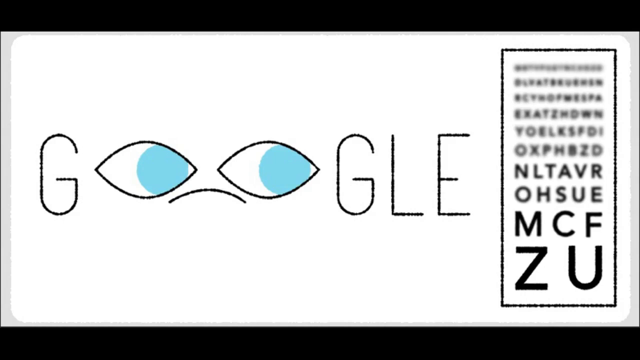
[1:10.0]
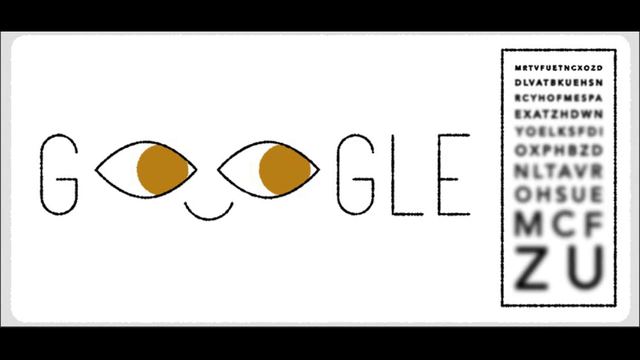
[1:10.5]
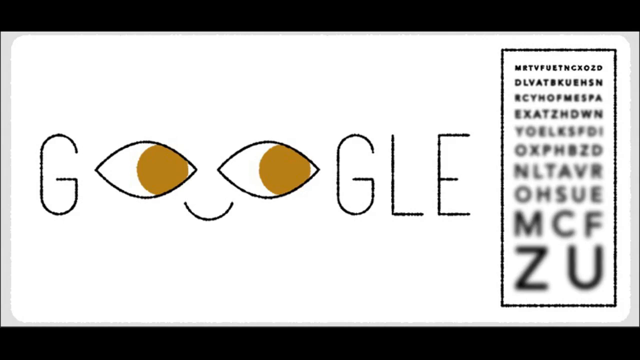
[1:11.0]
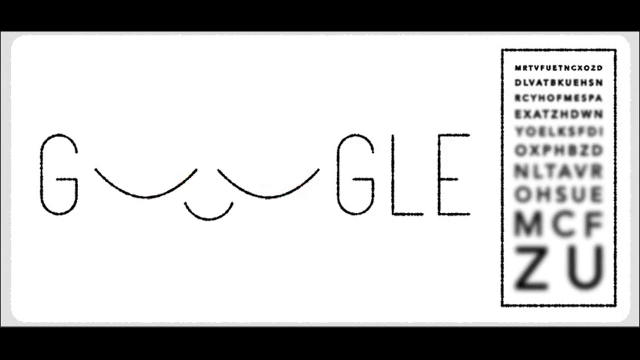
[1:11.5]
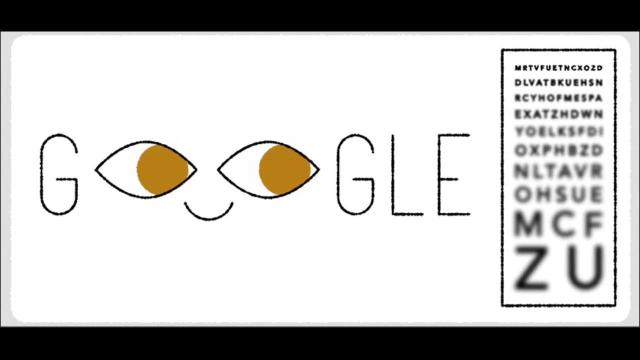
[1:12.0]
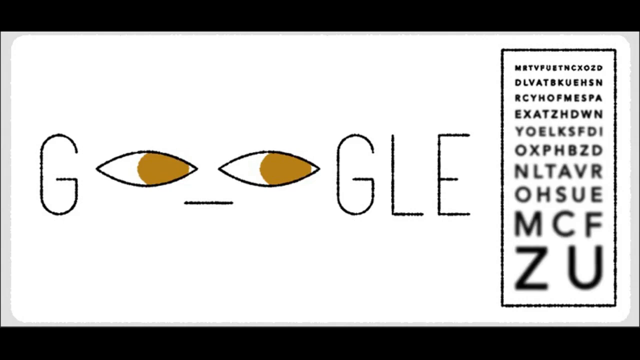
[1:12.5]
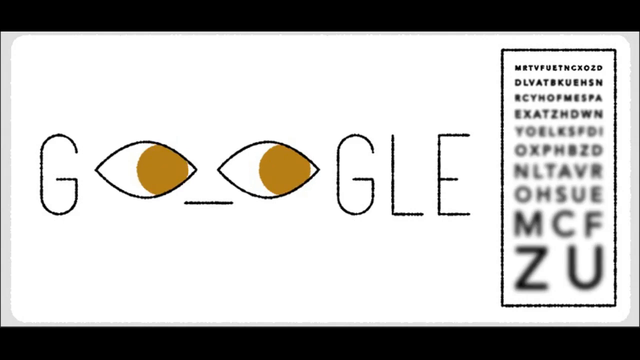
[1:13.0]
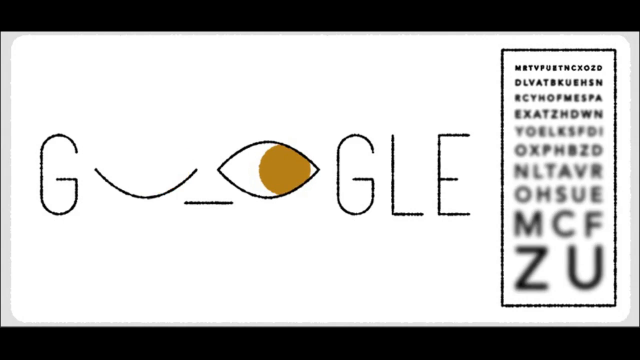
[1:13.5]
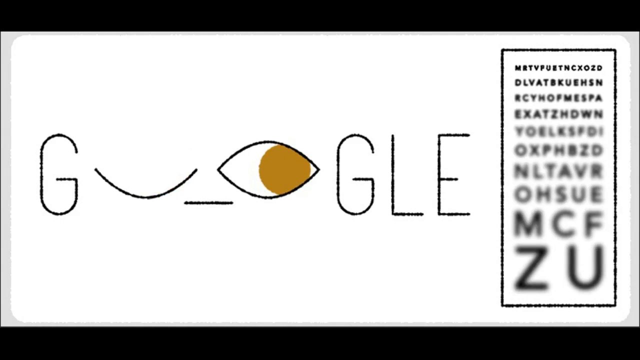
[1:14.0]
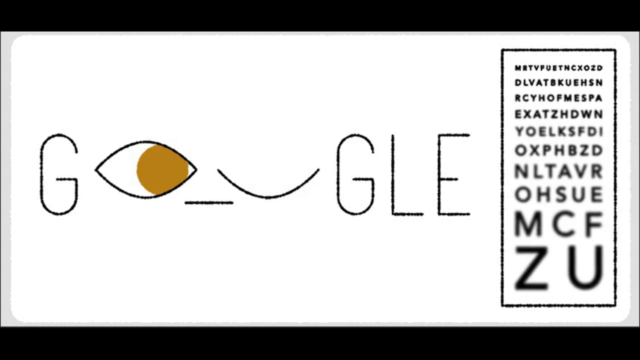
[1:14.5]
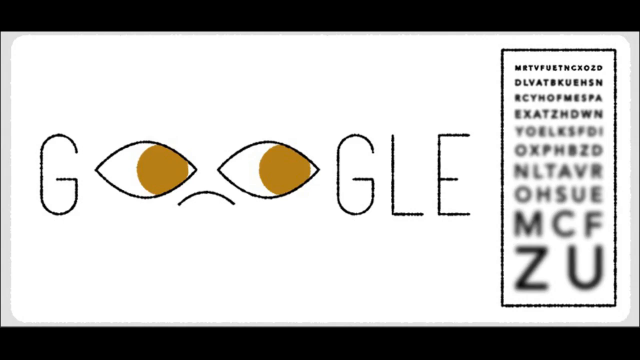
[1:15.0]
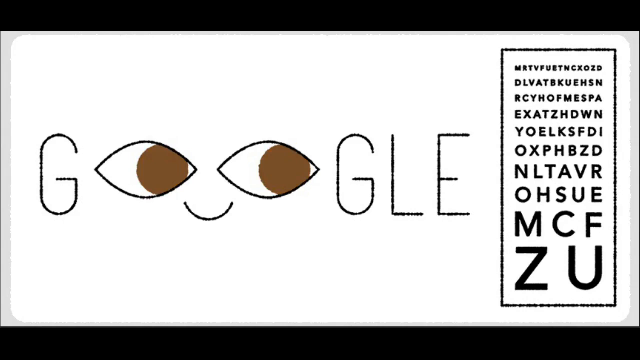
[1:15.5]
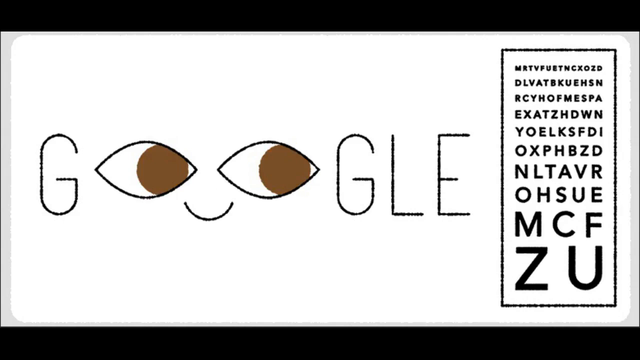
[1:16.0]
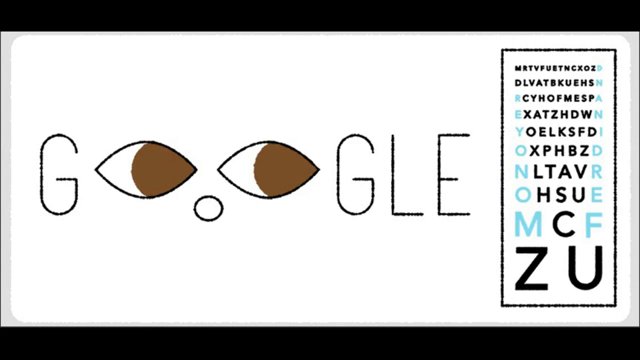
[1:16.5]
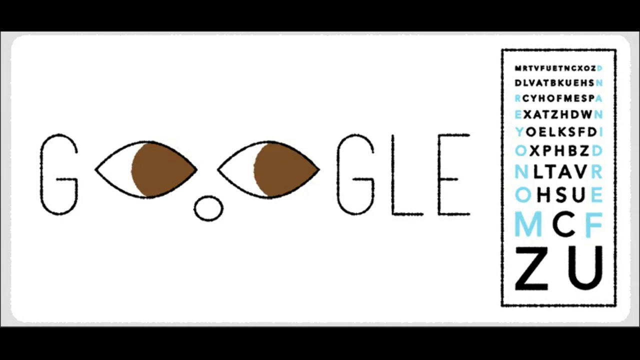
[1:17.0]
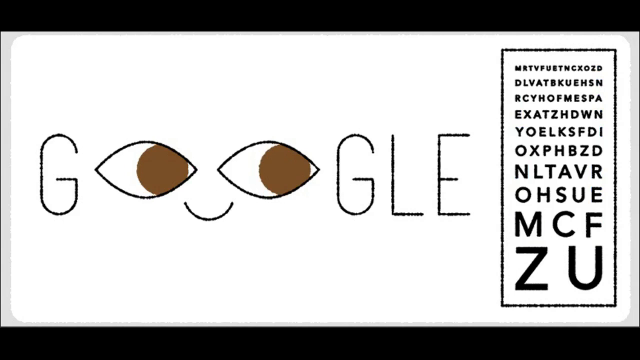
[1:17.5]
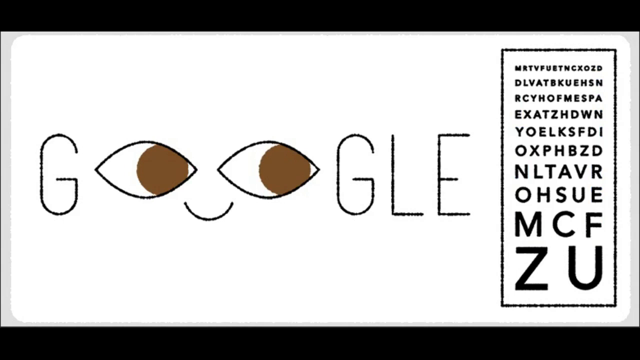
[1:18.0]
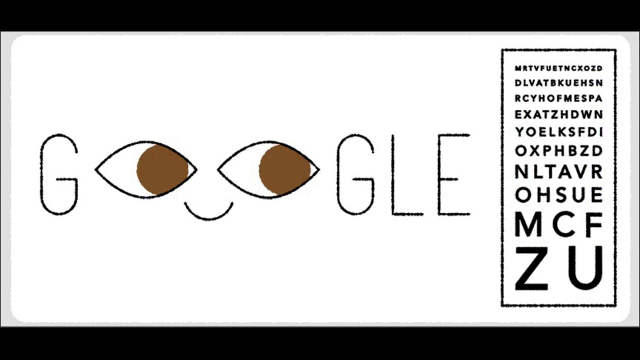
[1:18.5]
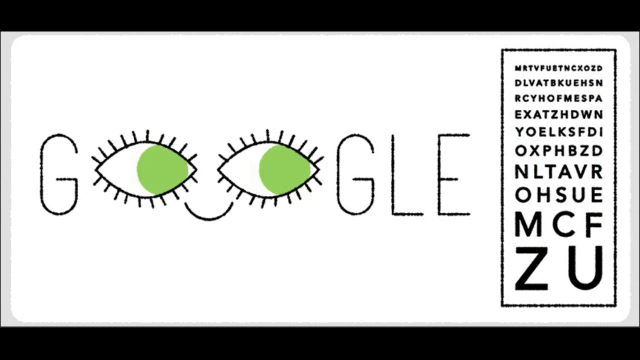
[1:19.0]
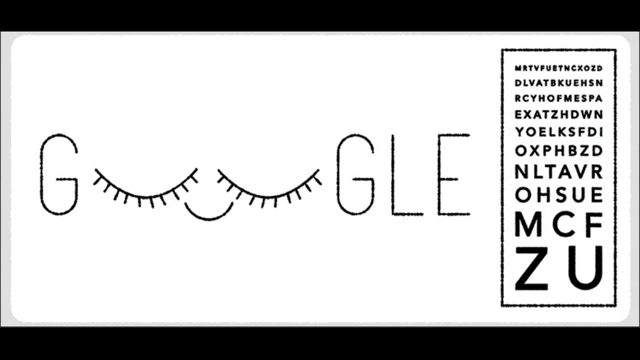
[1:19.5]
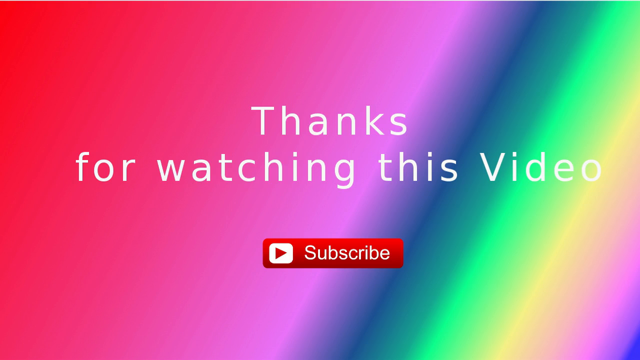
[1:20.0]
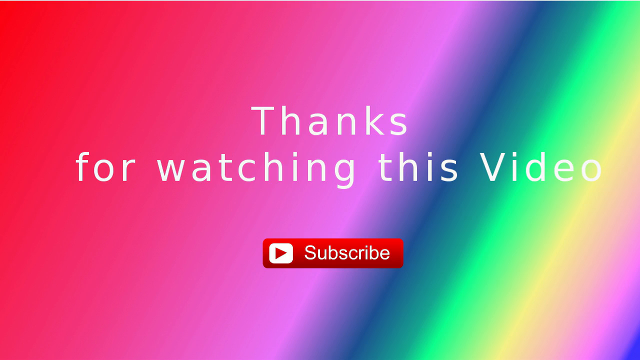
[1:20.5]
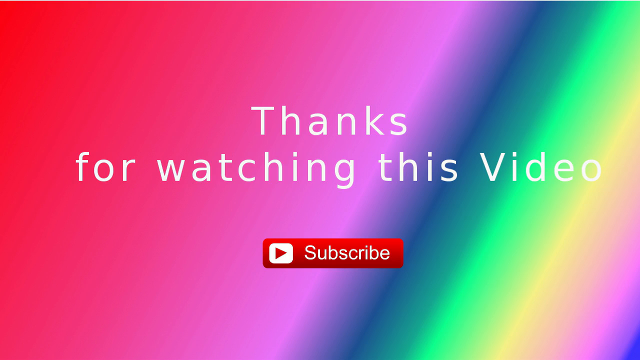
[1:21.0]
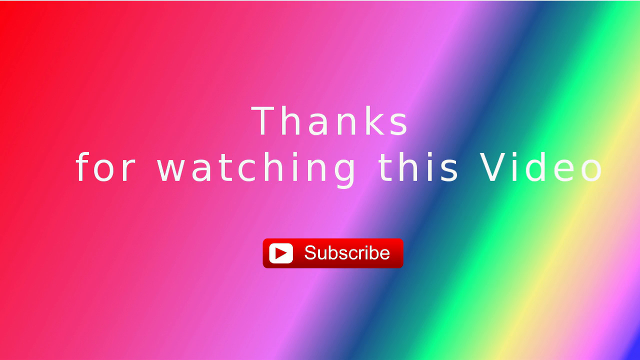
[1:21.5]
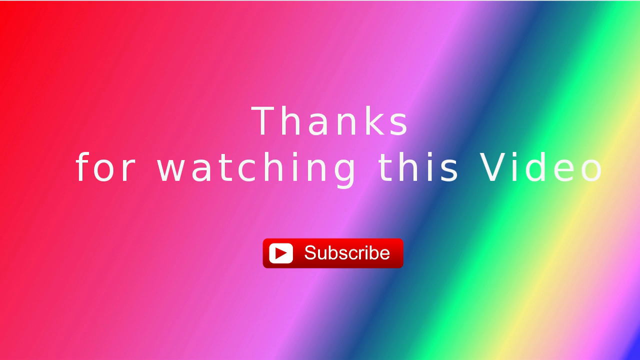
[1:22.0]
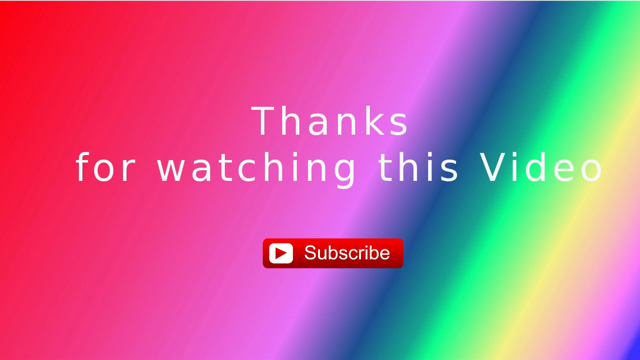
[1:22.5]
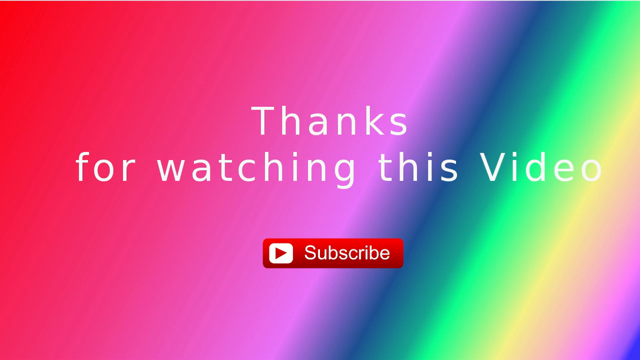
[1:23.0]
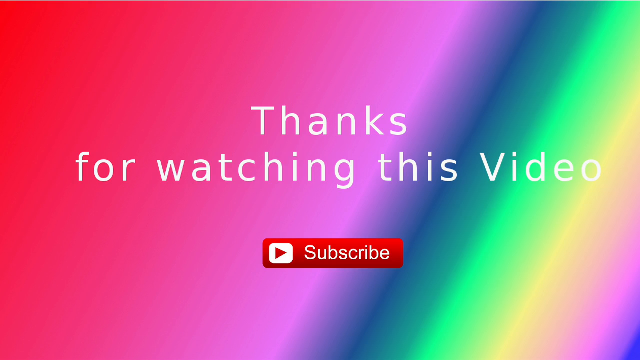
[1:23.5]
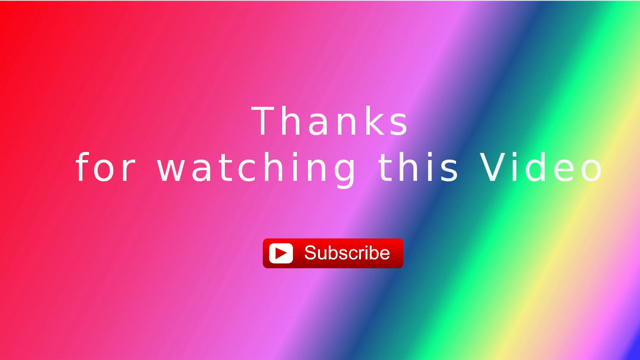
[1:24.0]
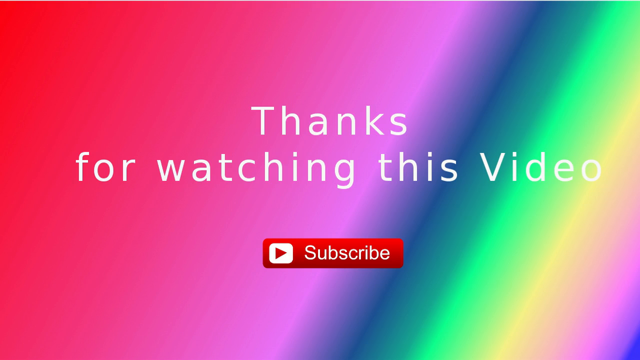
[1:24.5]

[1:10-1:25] On a white background, a black rectangle is on the right side of the screen, containing rows of individual letters. The letters appear blurred at first, but the blurring goes away. The word Google has expressive eyes, with its two O's shaped like eyes instead of actual O's. The scene then changes to a rainbow-colored background: red in the upper left corner, next to it violet, then blue, turquoise, green, yellow, and purple. Underneath is a subscribe button for the YouTube channel.